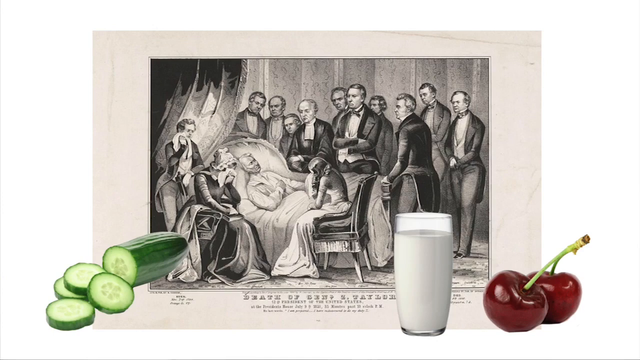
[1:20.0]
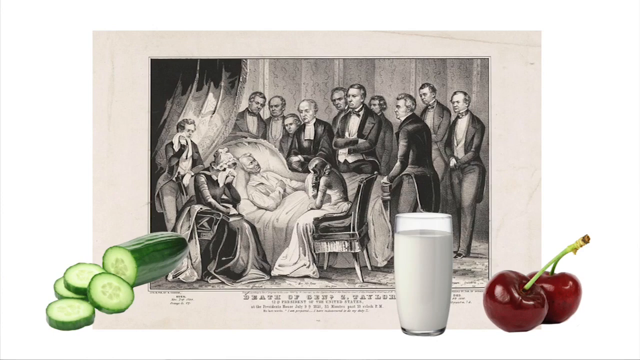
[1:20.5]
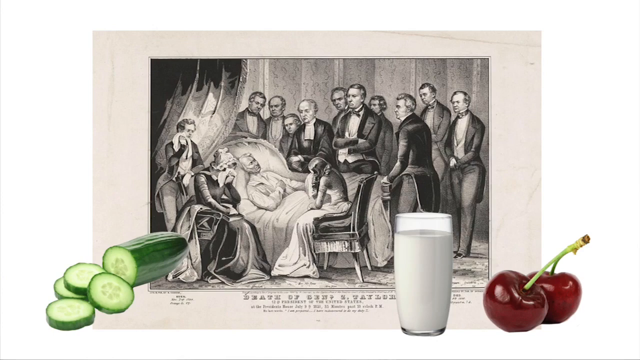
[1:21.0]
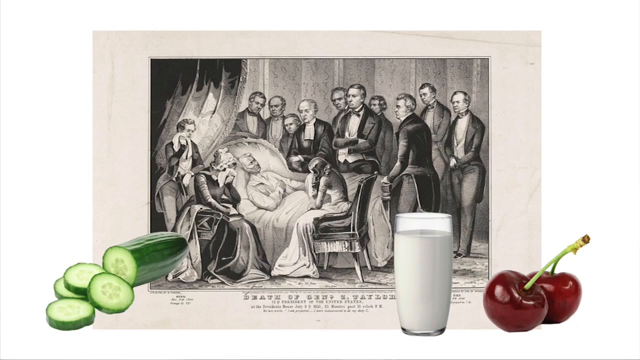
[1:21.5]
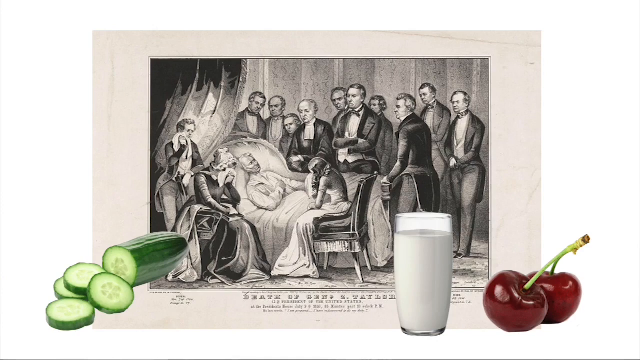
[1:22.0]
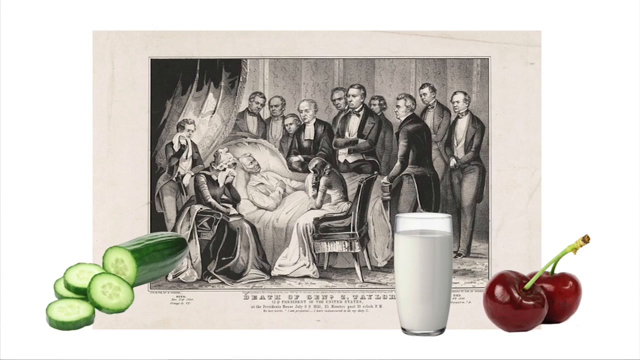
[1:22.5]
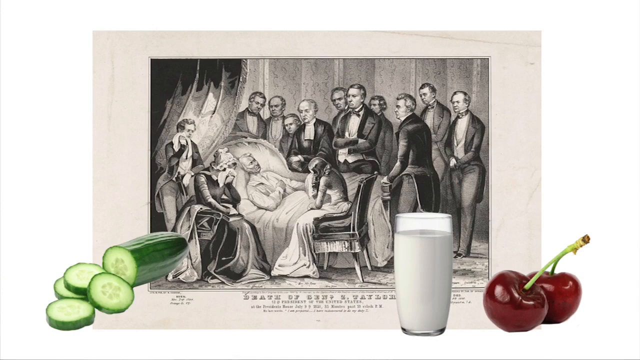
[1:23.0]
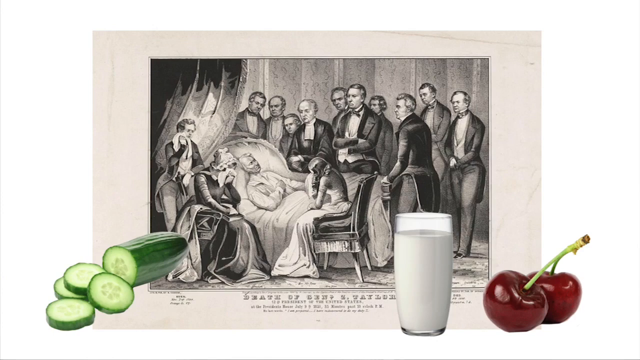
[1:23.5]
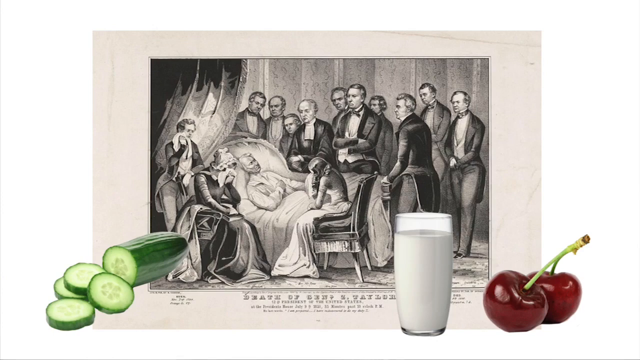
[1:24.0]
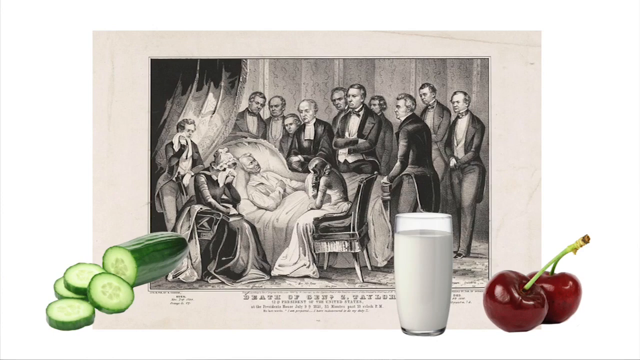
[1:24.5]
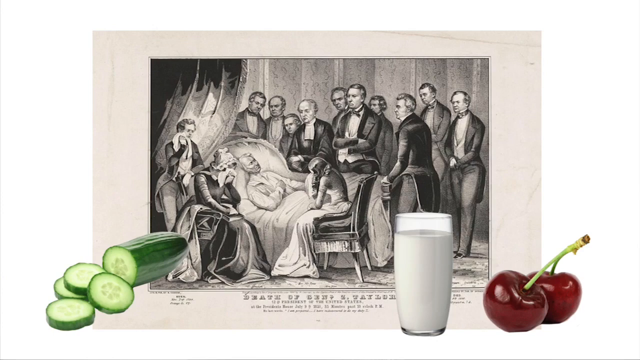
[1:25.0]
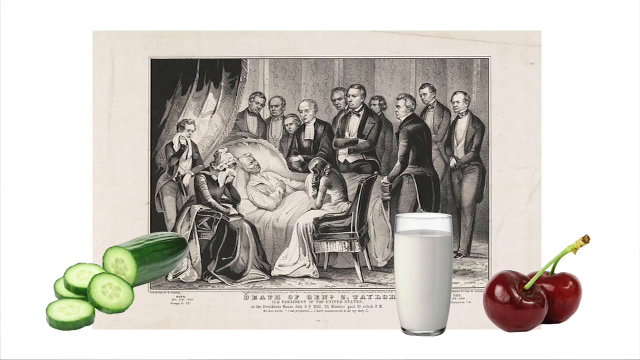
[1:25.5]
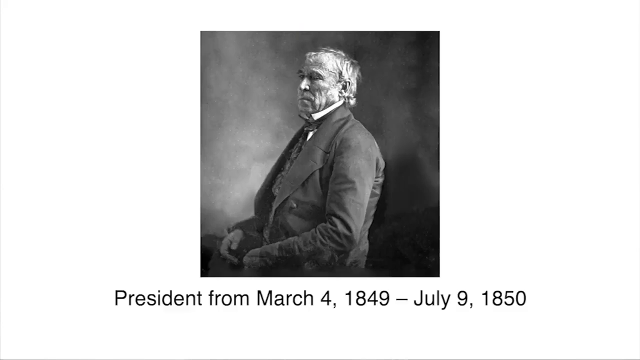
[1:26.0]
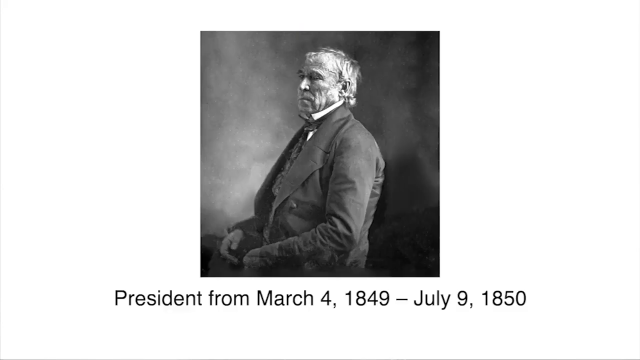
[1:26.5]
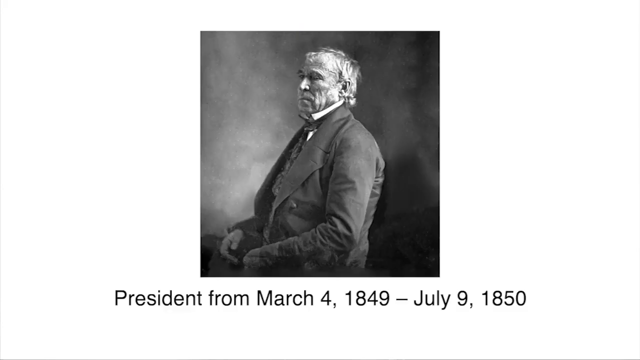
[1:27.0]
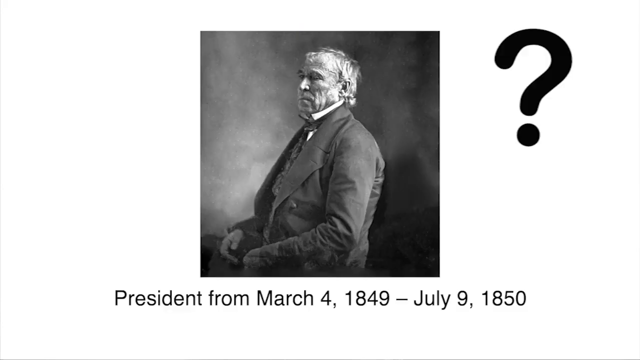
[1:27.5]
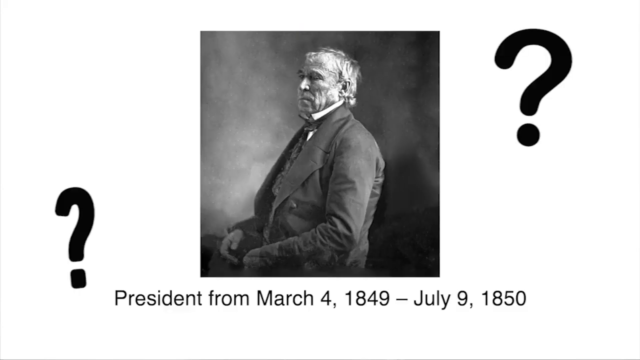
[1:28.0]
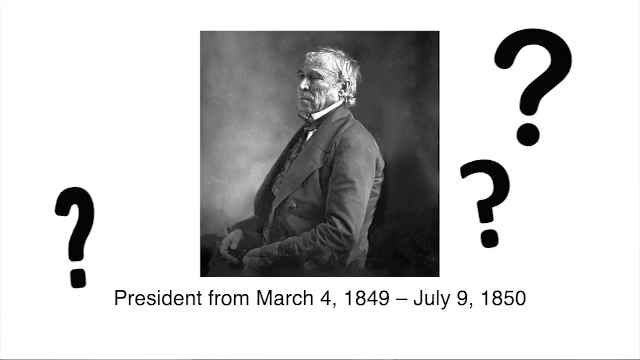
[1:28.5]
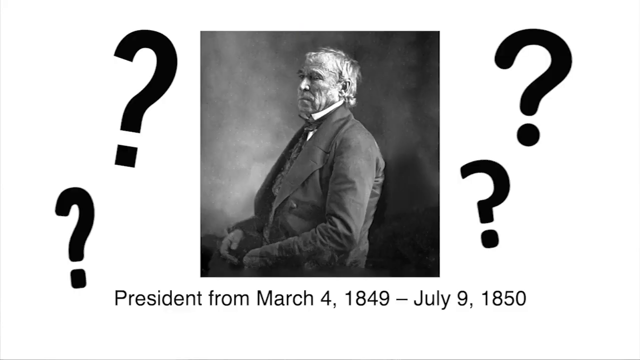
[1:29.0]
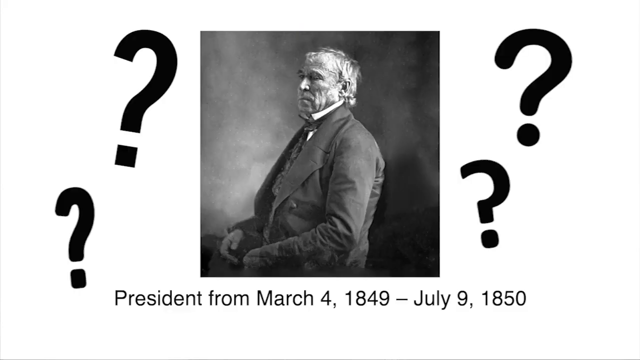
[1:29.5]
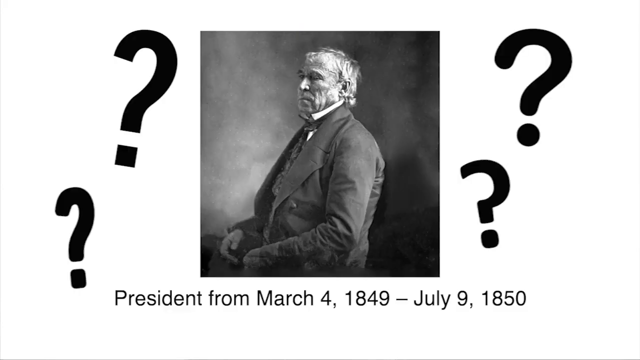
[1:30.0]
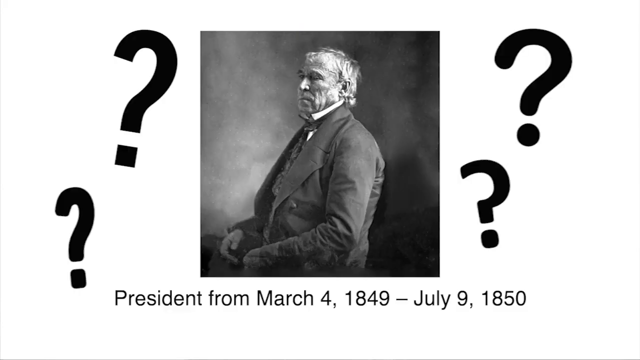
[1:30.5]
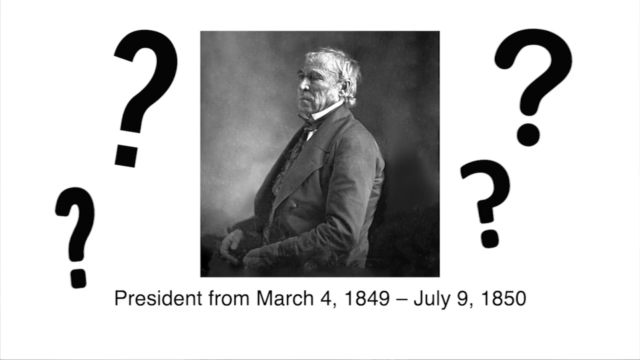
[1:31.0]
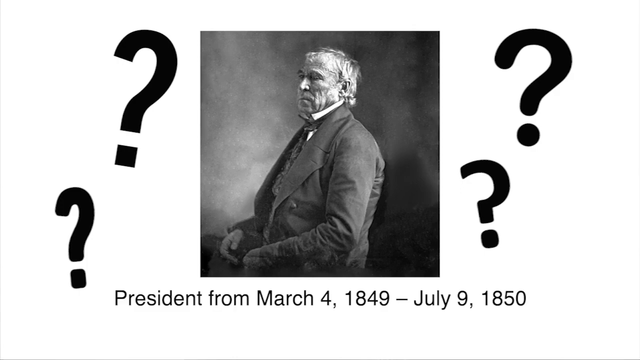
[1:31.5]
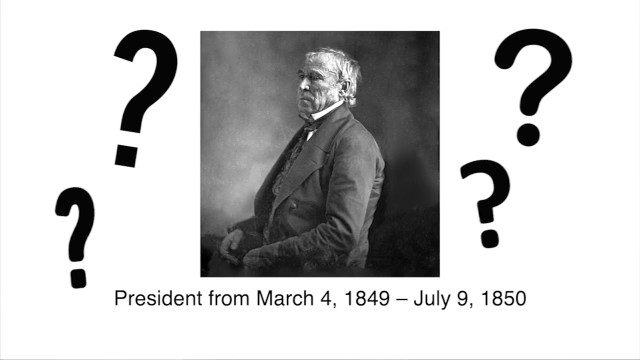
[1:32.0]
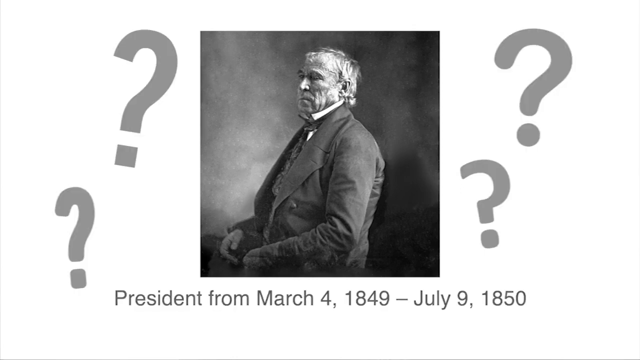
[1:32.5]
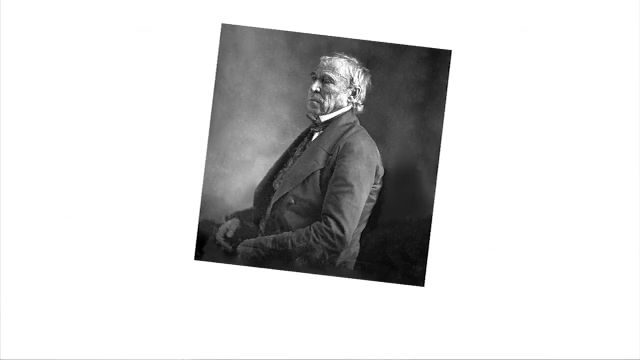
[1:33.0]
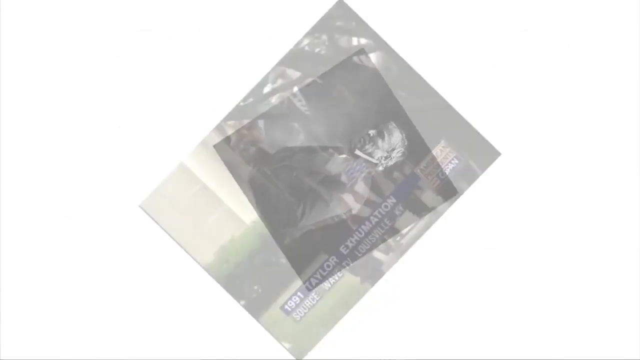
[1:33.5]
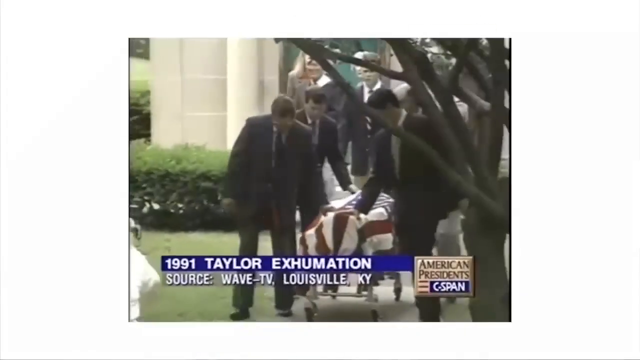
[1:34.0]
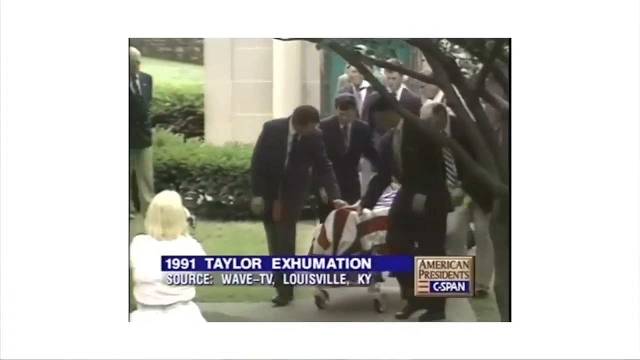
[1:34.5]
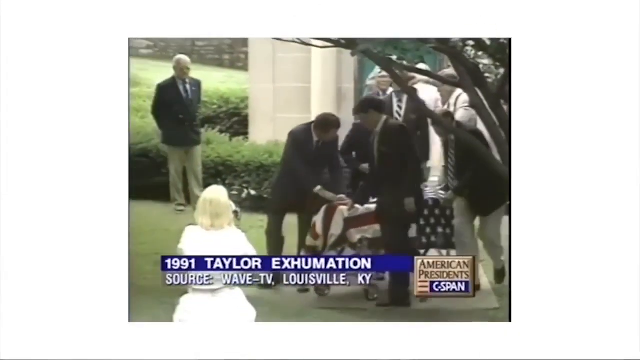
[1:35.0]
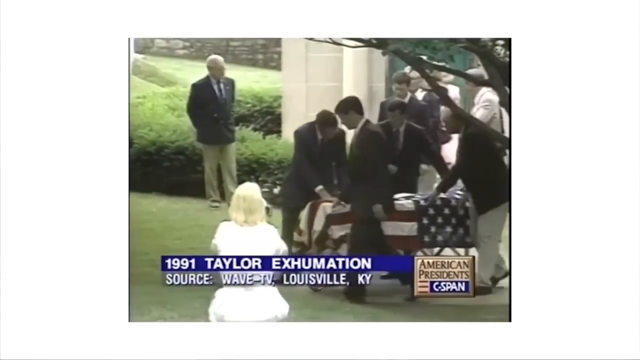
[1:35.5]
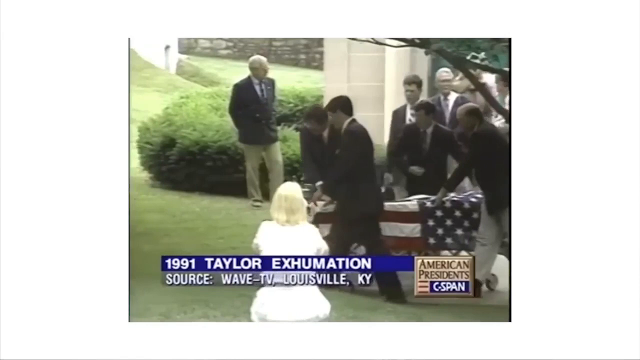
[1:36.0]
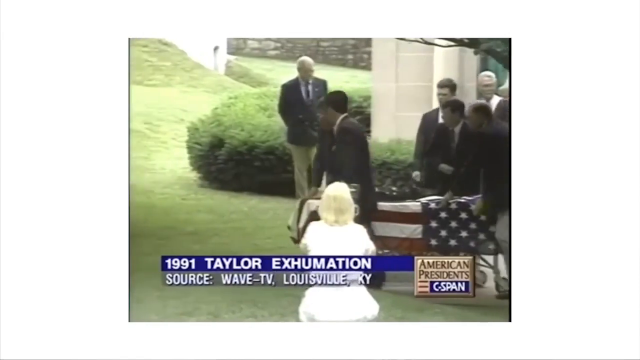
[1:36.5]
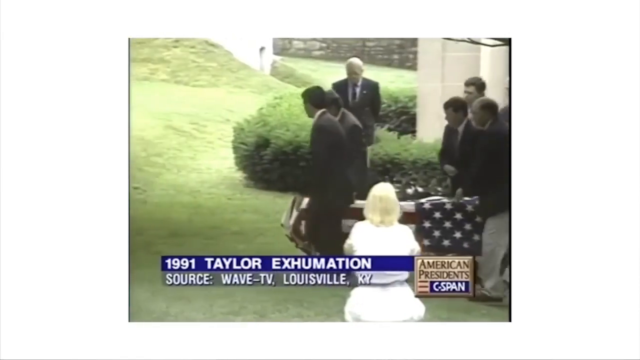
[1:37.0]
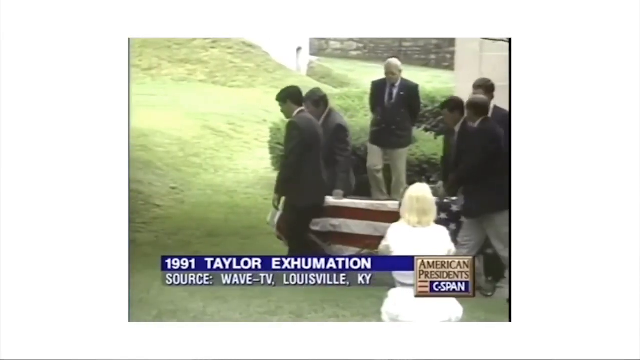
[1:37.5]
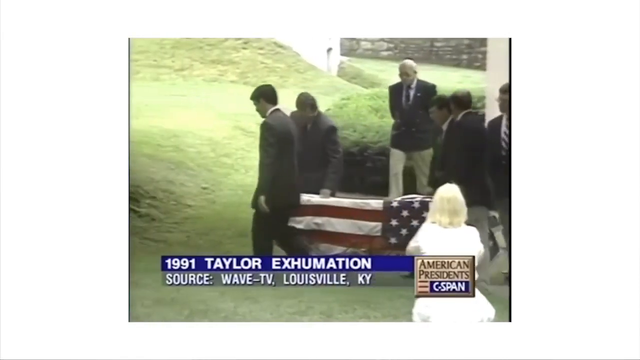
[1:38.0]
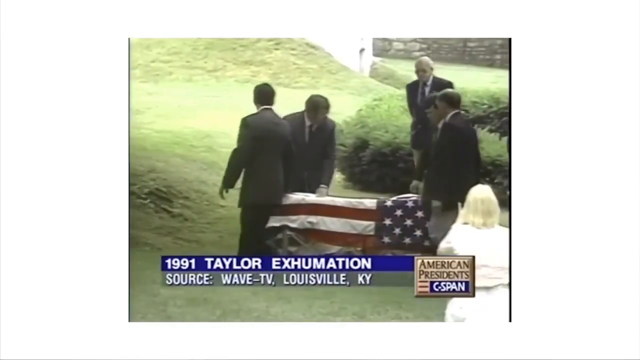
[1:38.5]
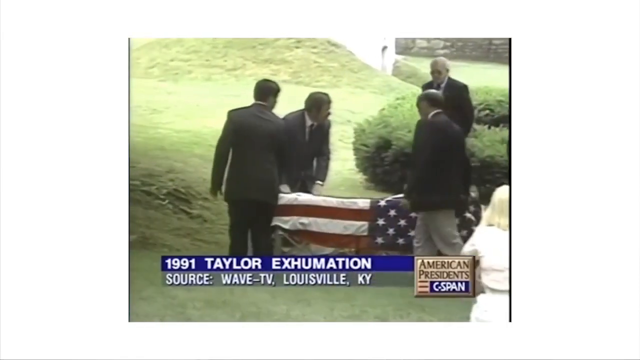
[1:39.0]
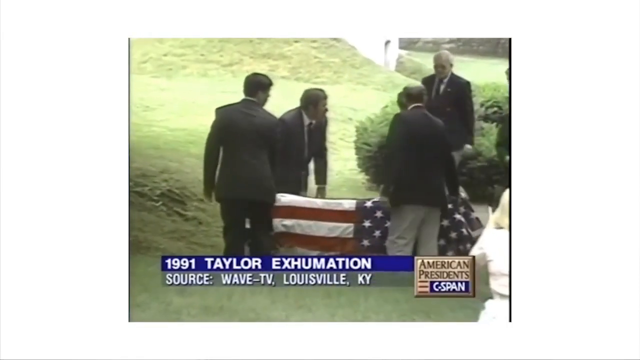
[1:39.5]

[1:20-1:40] A black-and-white picture shows a man who seems to be lying in bed and looks either dead or sleeping. Two women who seem to be crying sit on chairs in front of the bed, and a bunch of men behind the bed stare at him. The picture is completely black and white and seems to be drawn with a pencil or a pen. In front of the picture, on the lower left, is a cucumber: half of it seems to still be whole, and the rest is cut into slices, which are in front of the unsliced part. On the lower right is a glass of milk, and to the right of it are two cherries still attached to a stem that looks green.